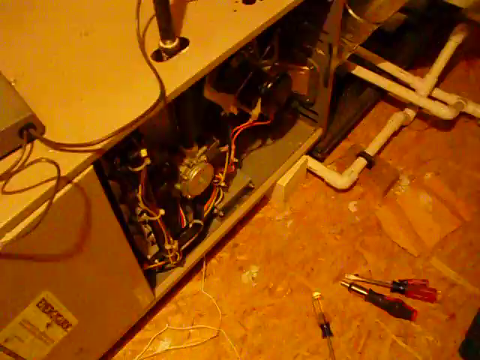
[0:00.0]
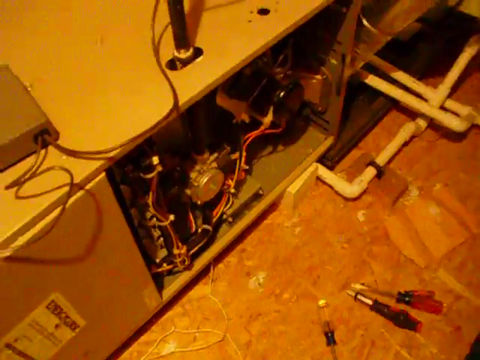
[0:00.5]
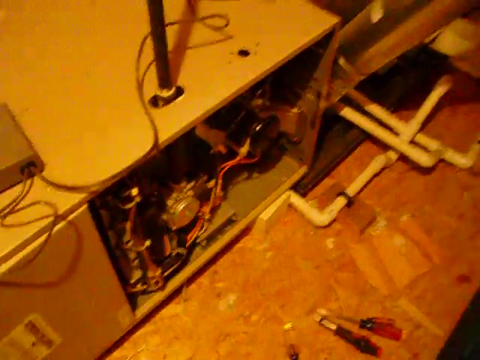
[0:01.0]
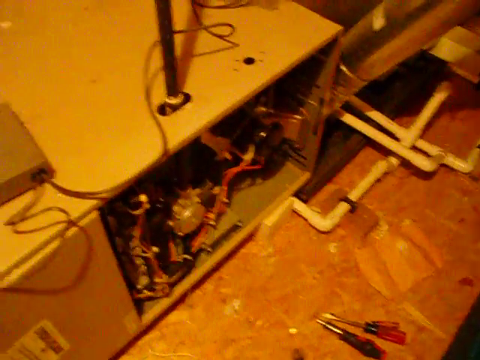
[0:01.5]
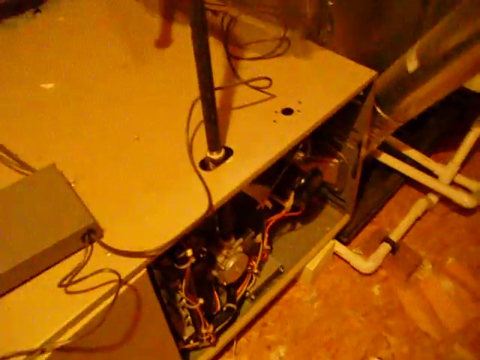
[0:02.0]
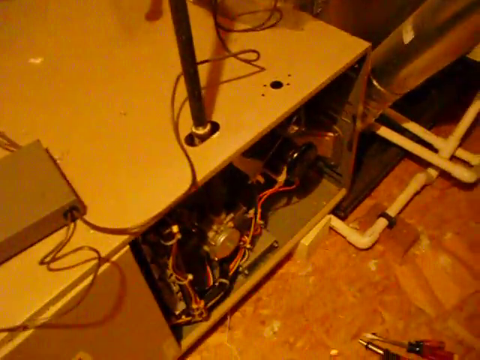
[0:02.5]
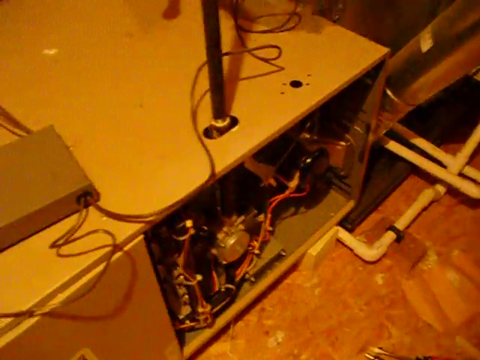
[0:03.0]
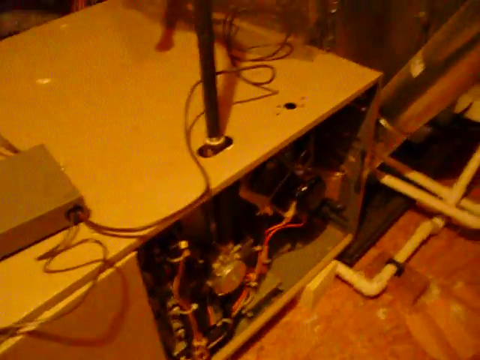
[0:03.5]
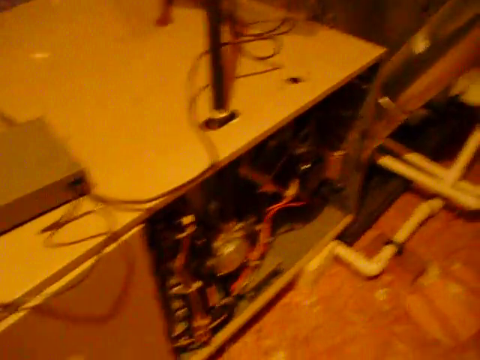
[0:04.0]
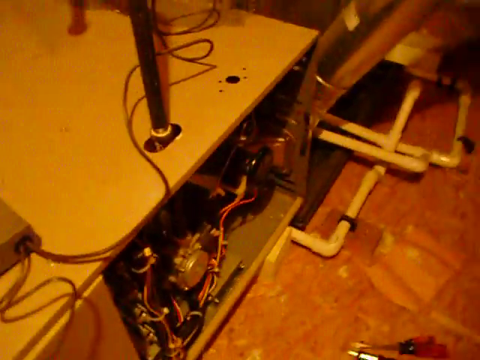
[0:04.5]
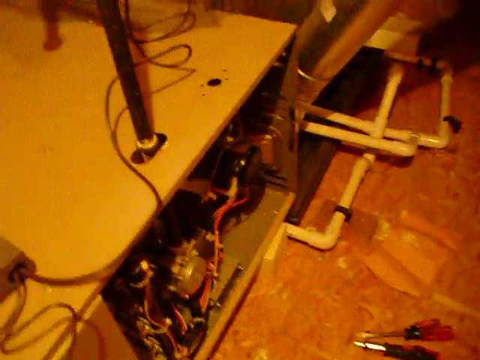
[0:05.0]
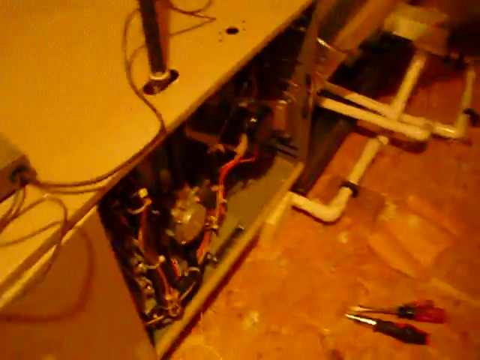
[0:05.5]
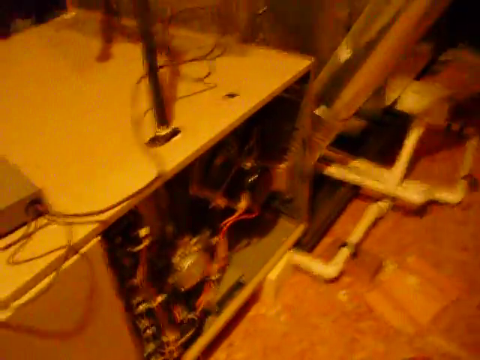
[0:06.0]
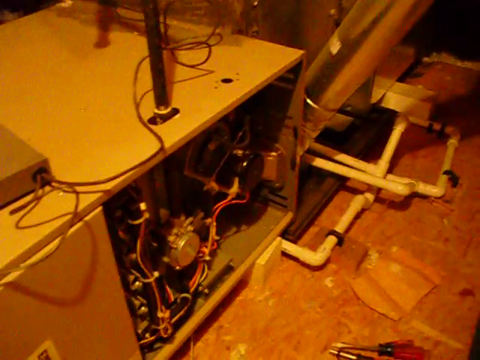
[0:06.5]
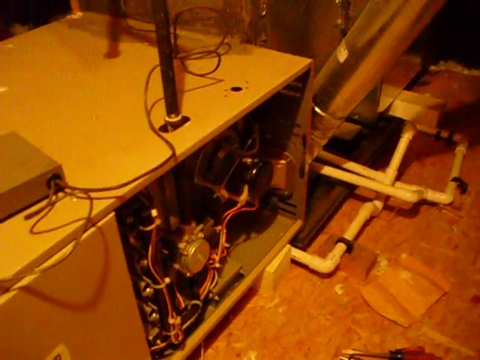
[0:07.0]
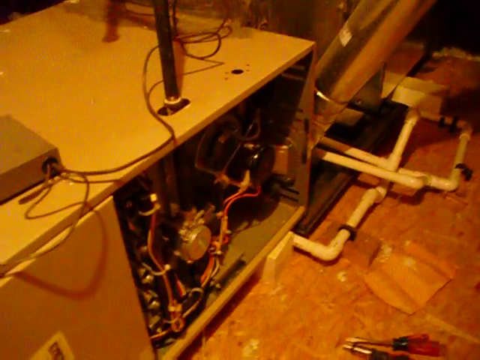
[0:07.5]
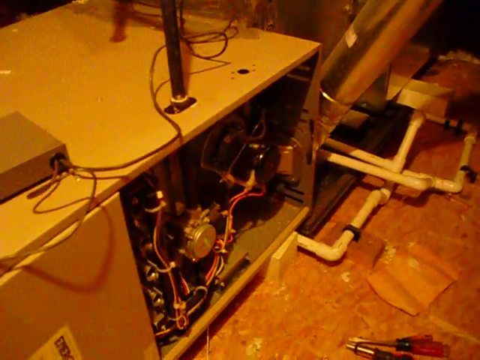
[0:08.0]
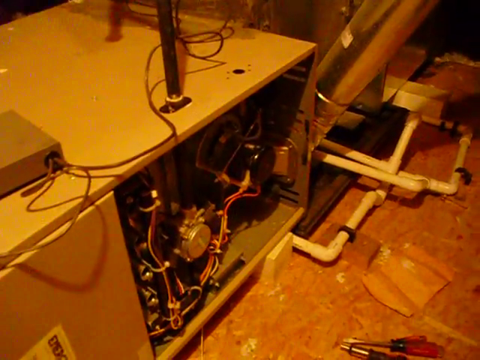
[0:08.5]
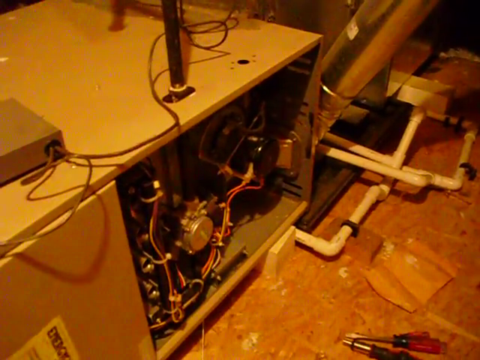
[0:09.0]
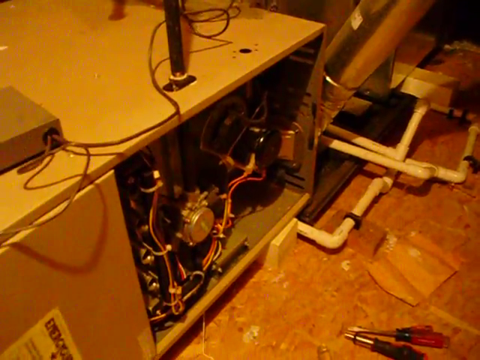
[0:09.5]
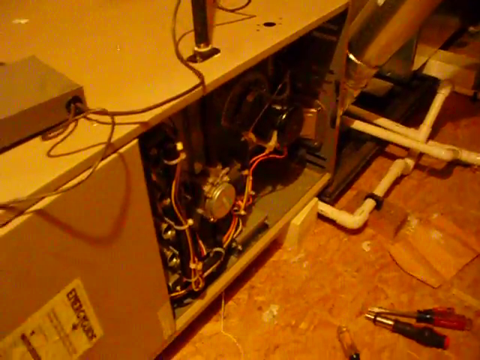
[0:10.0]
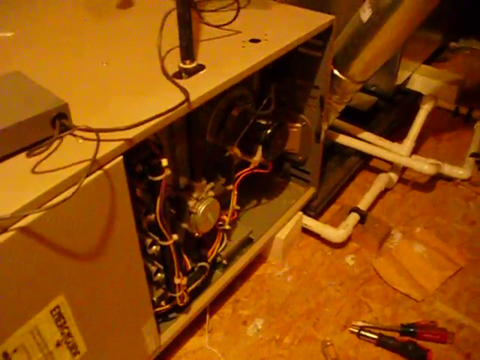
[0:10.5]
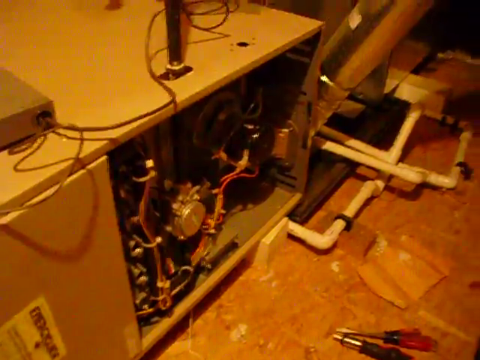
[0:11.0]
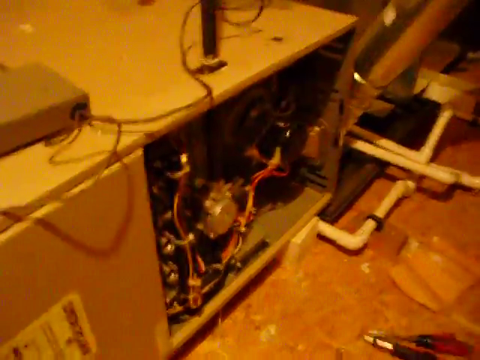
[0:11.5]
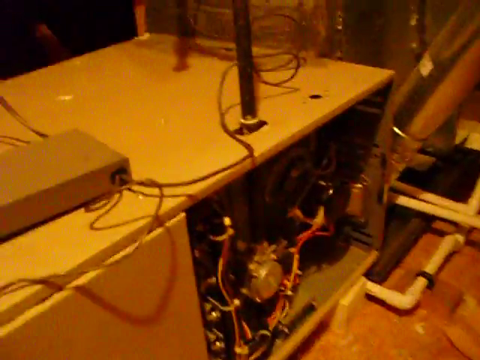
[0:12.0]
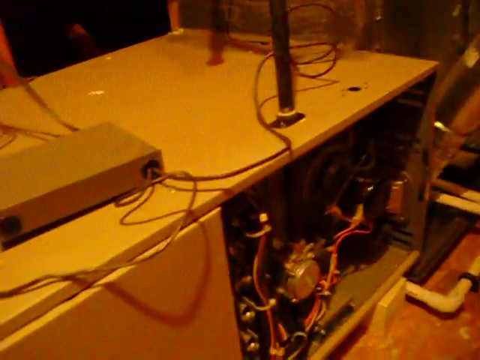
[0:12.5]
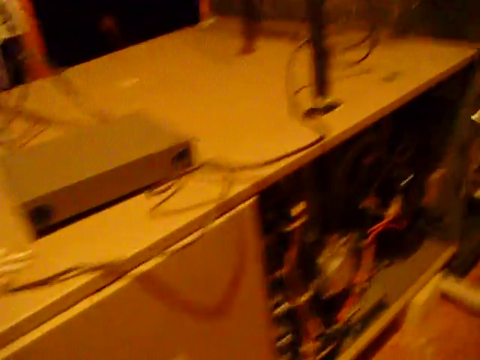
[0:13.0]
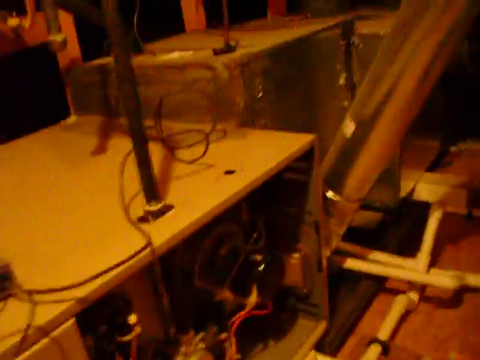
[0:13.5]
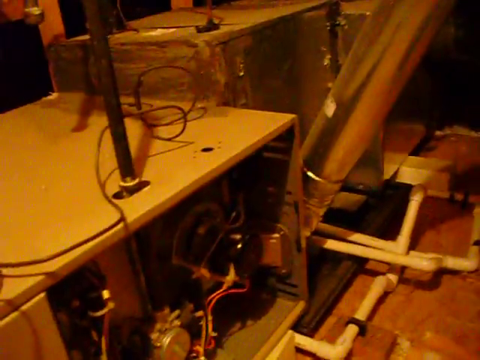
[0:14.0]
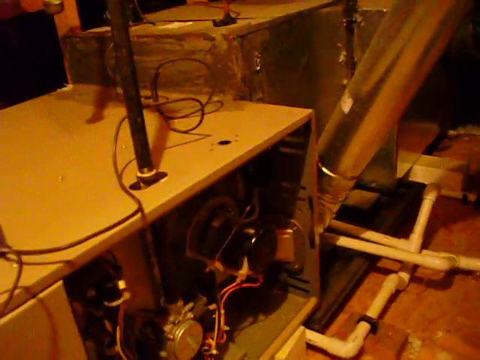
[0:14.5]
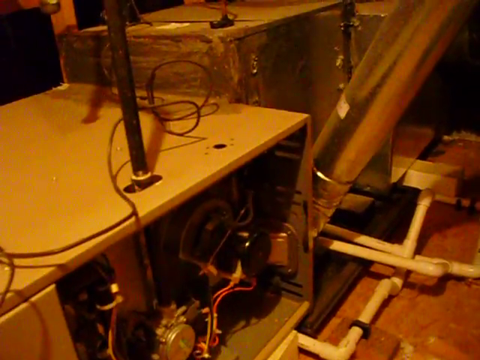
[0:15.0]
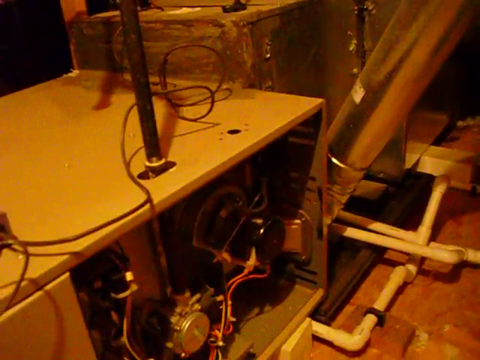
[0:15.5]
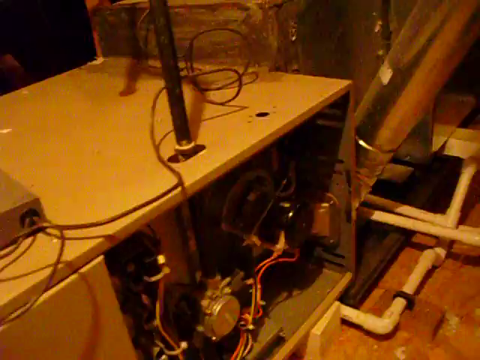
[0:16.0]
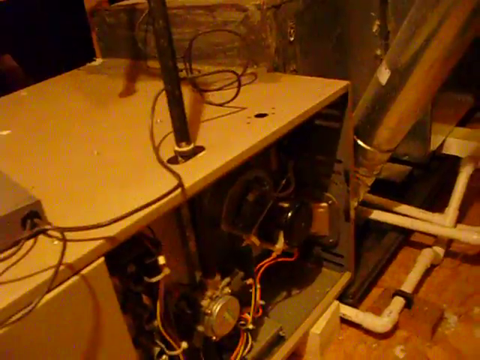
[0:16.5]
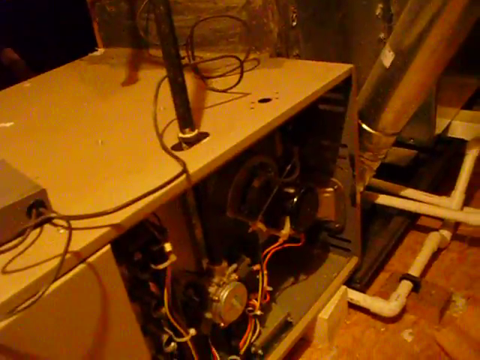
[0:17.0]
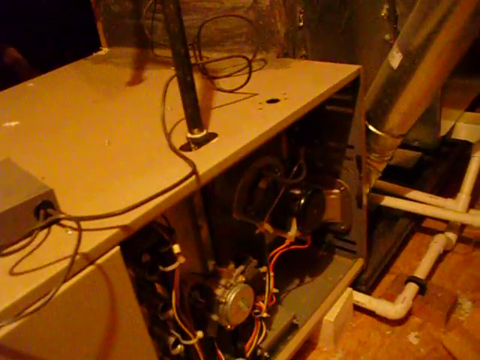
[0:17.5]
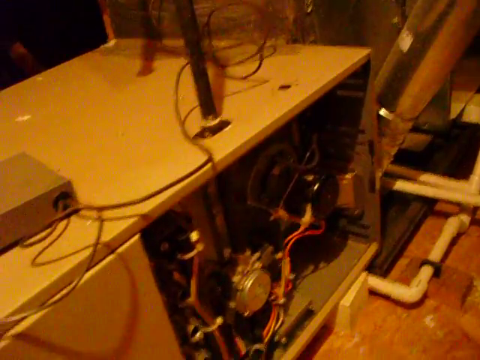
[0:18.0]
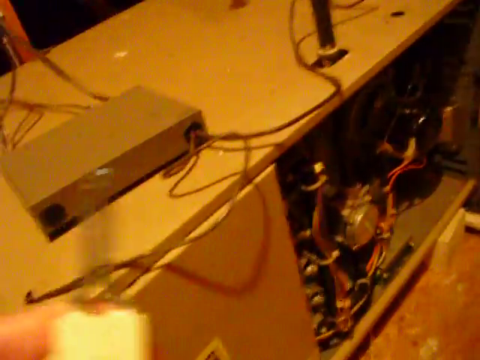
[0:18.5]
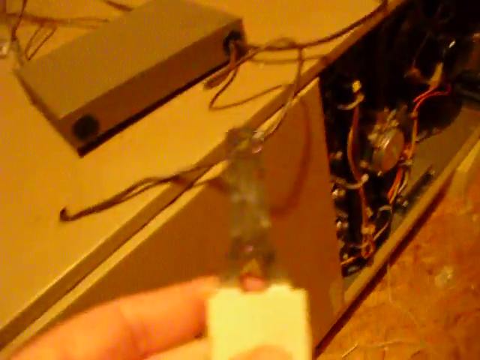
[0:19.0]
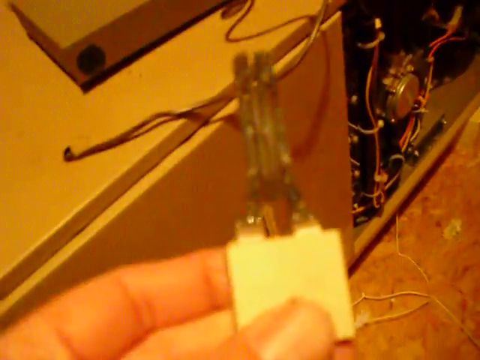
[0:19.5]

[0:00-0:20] A metal box with wires coming out of it, apparently, is in the middle of the screen. One panel of the box has been removed to reveal the inside, where cables of different colors lie around, running in different directions. There are also other components that appear to be electrical and mechanical in nature, and in the middle there is probably a pump-looking metal cylindrical object. Cables also run out in different directions from openings at the top of the box. On the right side of the frame, outside the box in the room, white pipes run in different directions over and around one another. The ground appears to be made of wood or plywood, and some hand tools lie on it. Toward the end, a hand comes up into focus holding what appears to be some form of circuit breaker: a white square, apparently made of plastic, with two metal parts extending upwards.